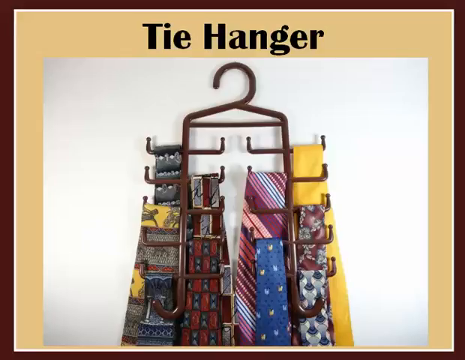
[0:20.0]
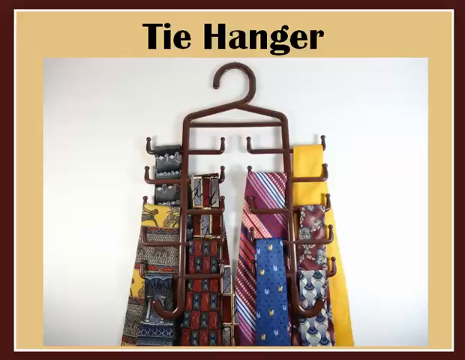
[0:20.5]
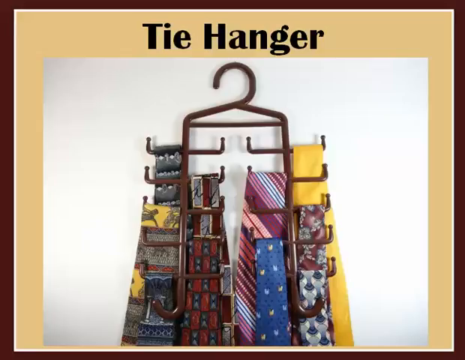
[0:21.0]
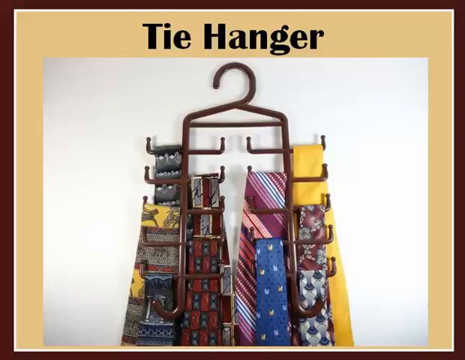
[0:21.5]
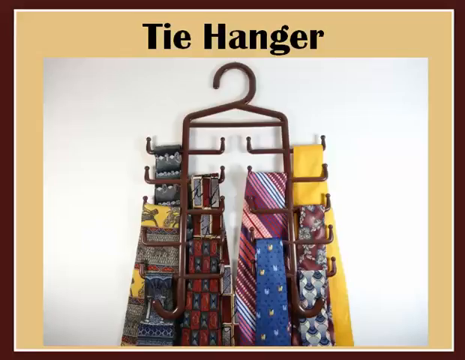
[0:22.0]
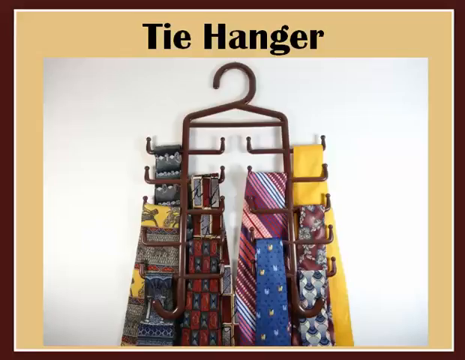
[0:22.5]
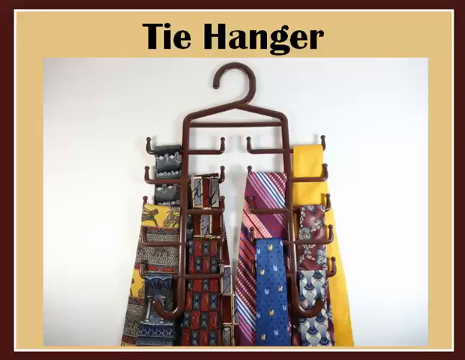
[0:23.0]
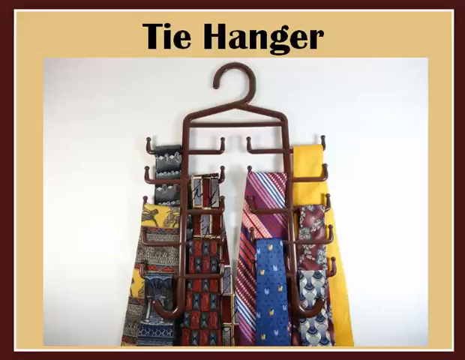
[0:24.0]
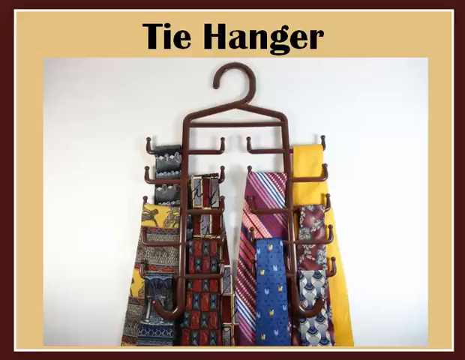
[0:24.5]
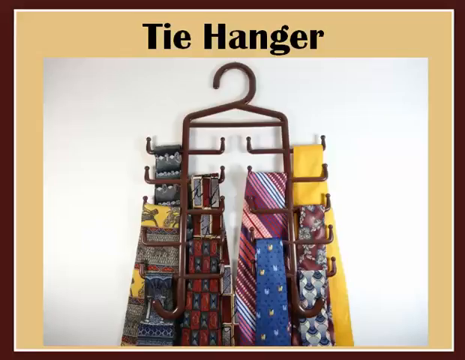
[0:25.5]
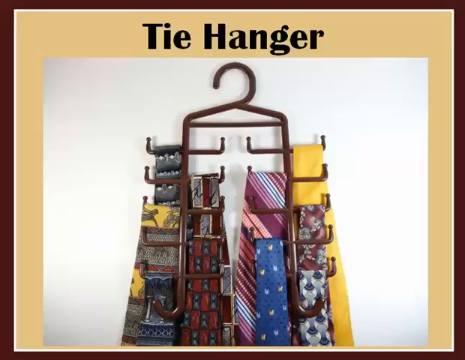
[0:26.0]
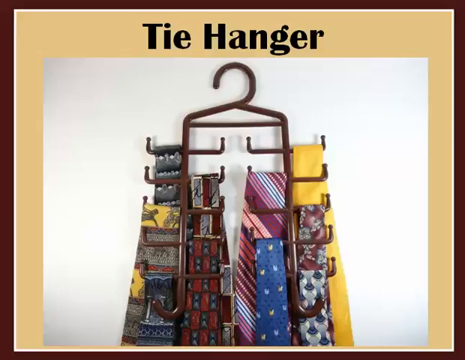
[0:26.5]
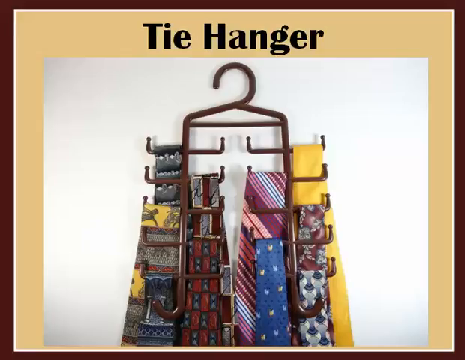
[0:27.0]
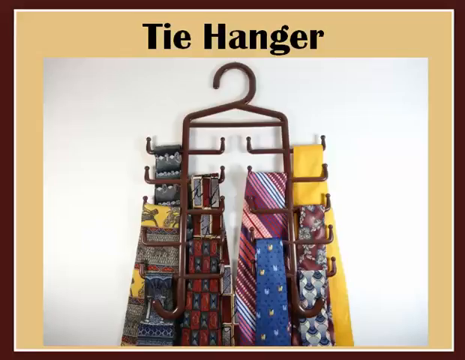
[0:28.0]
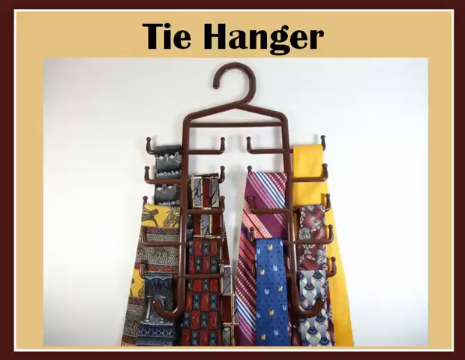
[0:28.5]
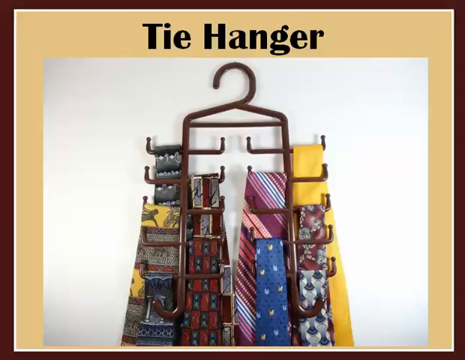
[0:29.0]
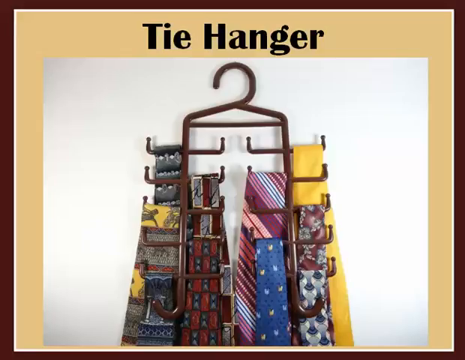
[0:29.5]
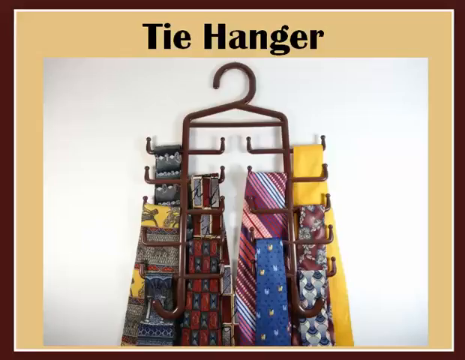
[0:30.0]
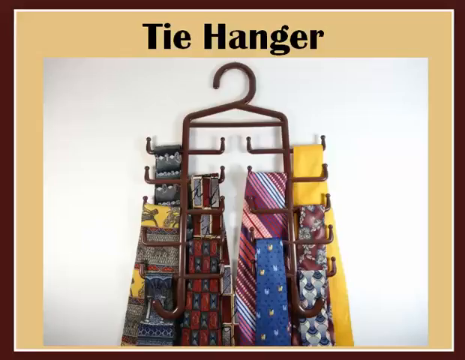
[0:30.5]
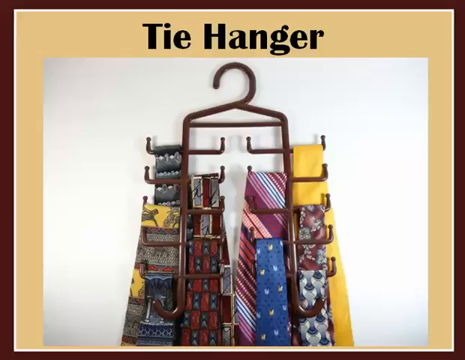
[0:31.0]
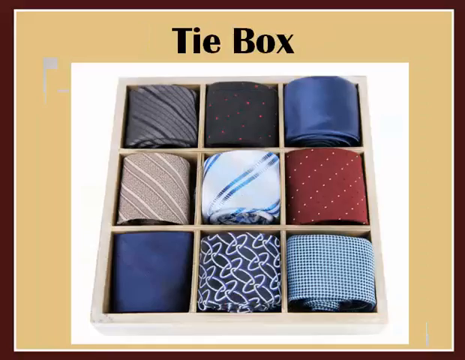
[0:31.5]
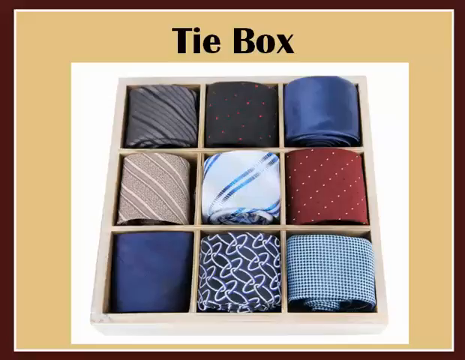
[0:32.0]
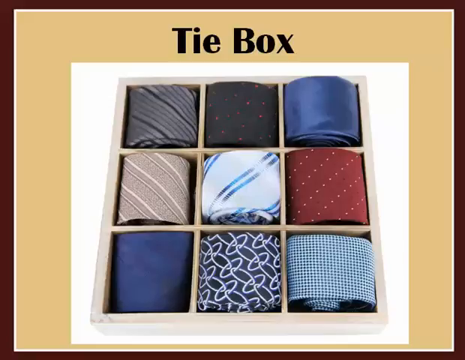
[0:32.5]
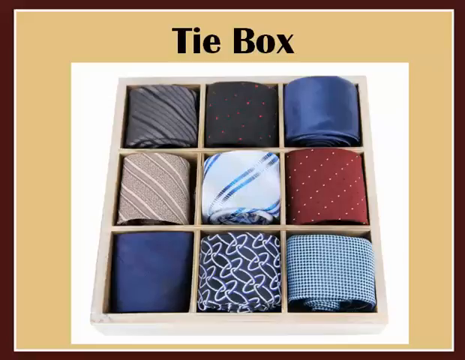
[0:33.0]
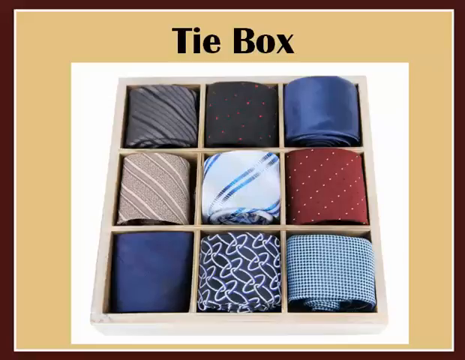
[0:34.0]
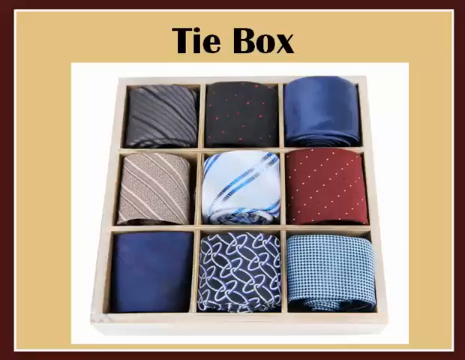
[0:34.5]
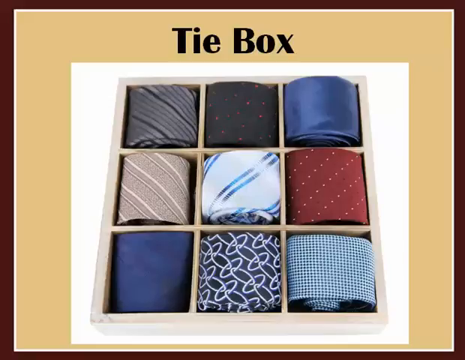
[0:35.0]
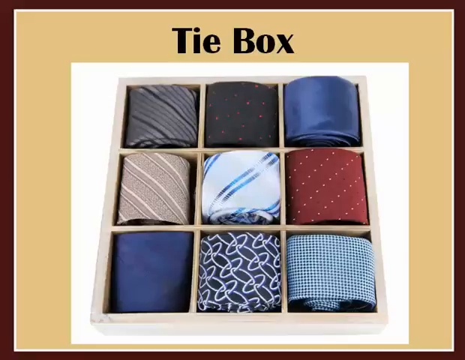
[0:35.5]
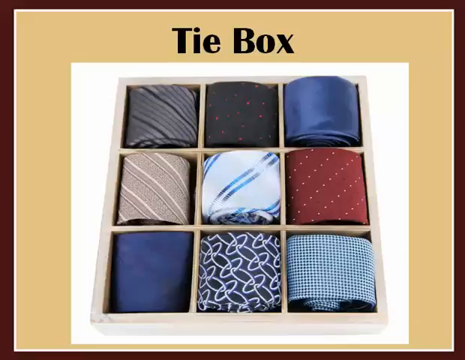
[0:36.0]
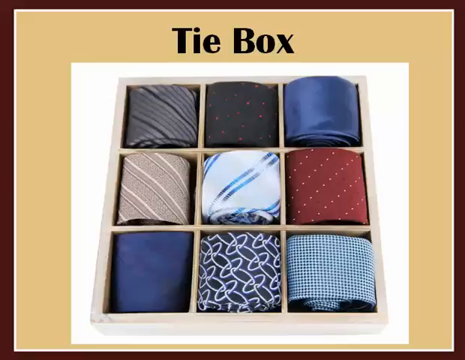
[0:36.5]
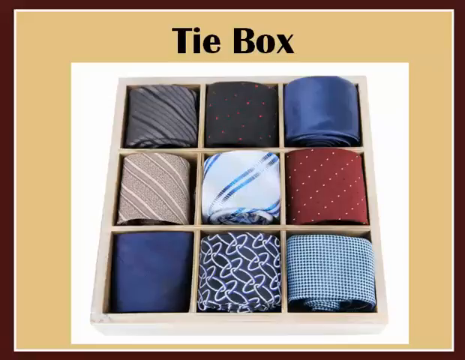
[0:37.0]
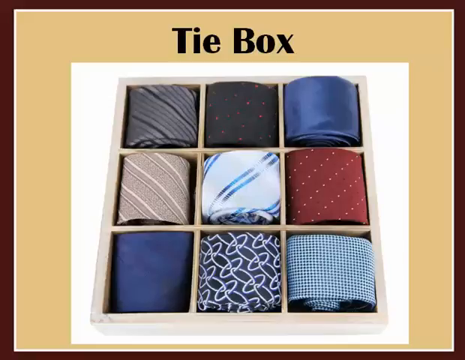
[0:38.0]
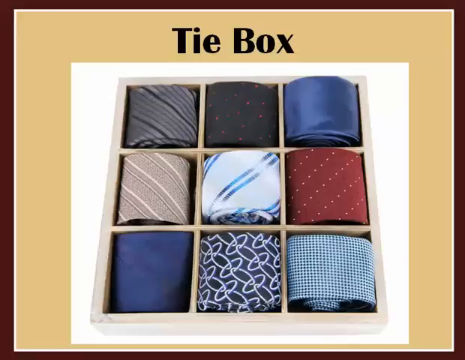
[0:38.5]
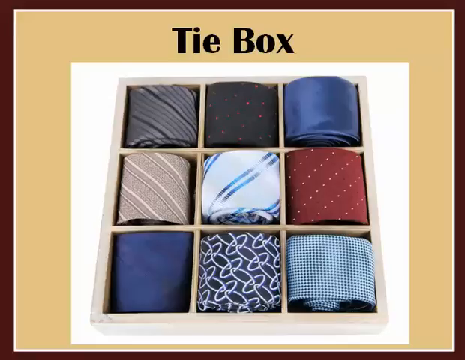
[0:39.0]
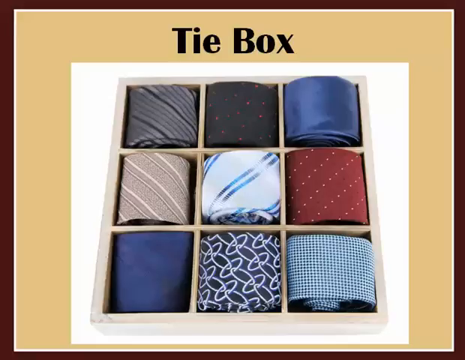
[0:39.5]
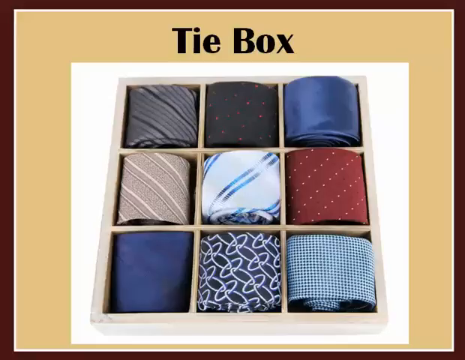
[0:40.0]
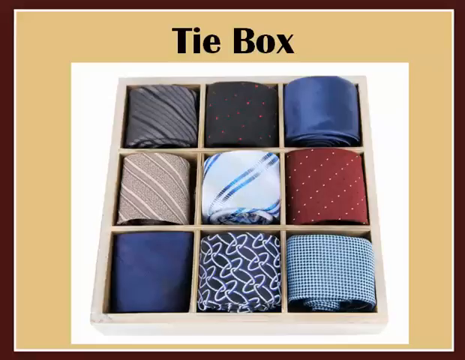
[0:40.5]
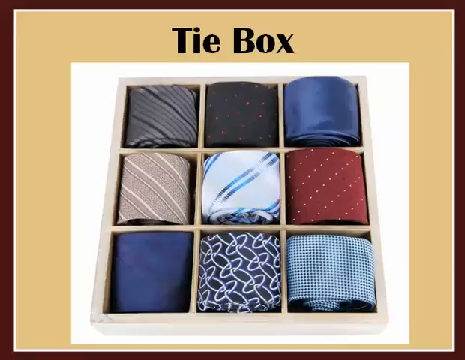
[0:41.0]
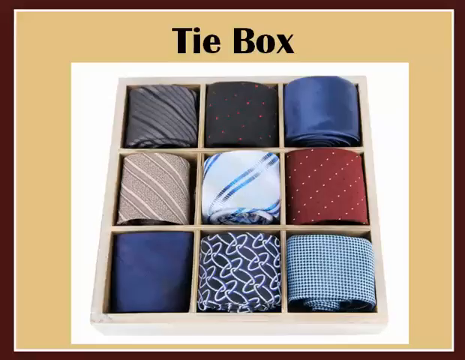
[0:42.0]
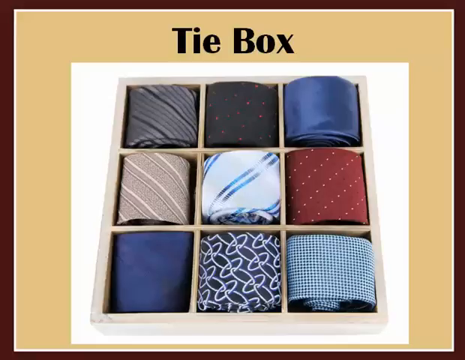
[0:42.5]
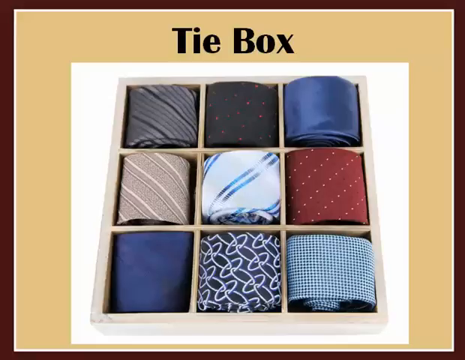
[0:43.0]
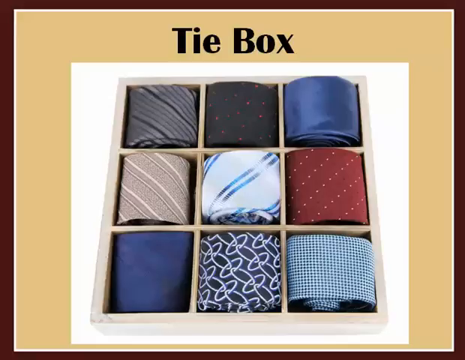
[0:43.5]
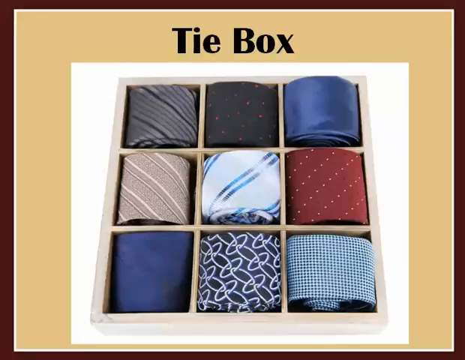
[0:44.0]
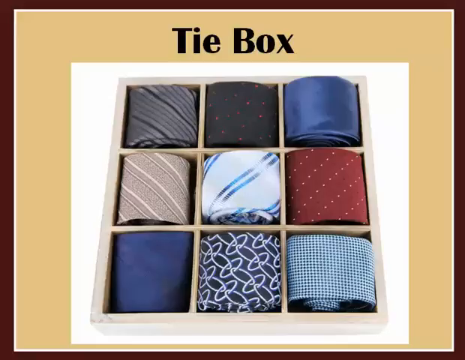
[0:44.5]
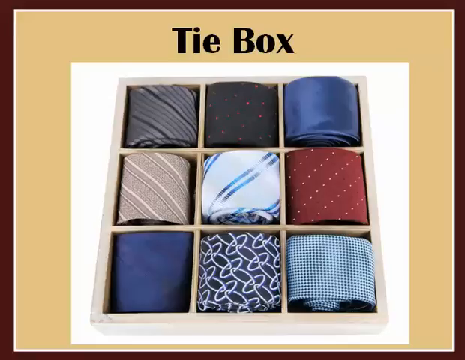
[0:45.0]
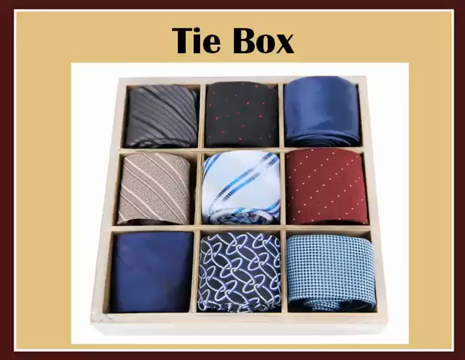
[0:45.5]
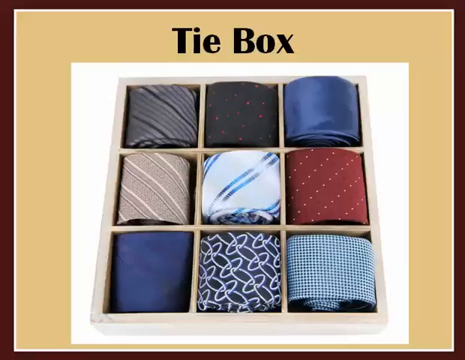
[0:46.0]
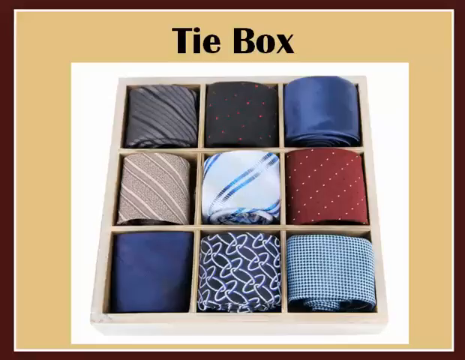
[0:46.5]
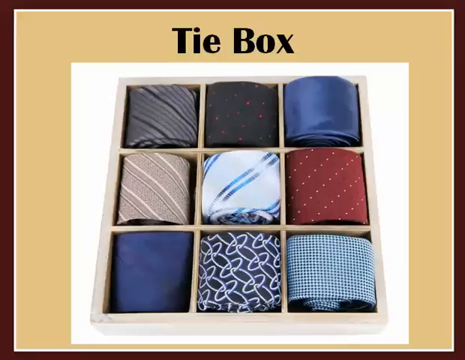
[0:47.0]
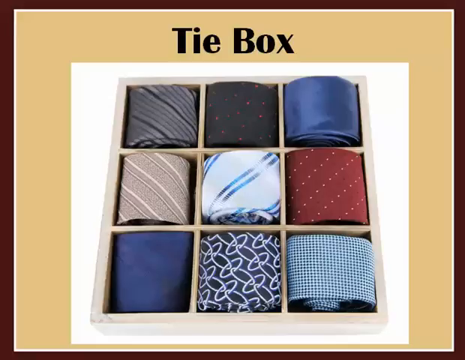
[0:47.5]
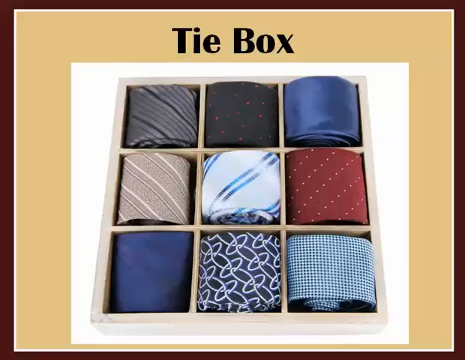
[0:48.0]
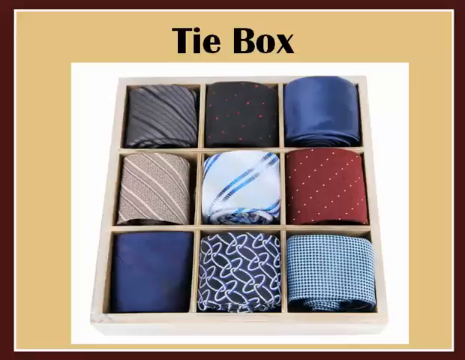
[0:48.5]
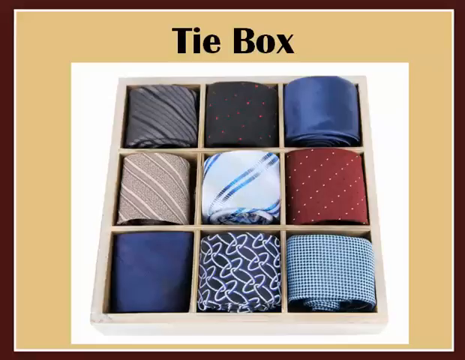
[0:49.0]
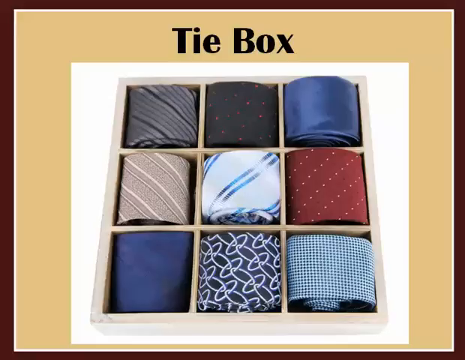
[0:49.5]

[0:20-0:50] The brown tie hanger continues to be shown, with different ties hanging on its sections. Next comes the tie box, a wooden box with nine square sections, each holding a tie rolled up so that it fits. In the top row are a tie with slanting white and grey stripes, a black tie with red spots in the middle, and a blue velvet tie at the right end. Below that are a maroon tie with white slanting dots, a white tie with blue slanting lines in the middle, and next to it a white and brown tie that is also slanting. In the bottom row are a blue tie, a black tie in the middle with white designs that look like rings attached to each other, and in the bottom right corner a tie with white and blue lines.